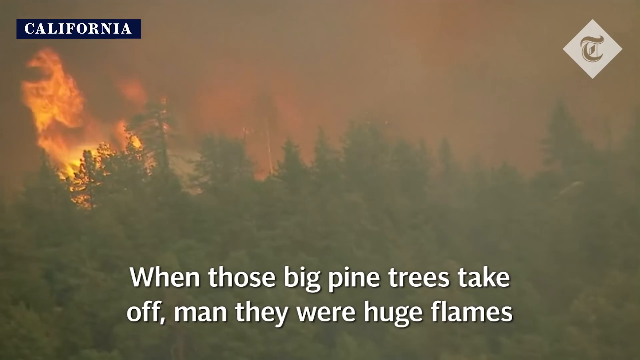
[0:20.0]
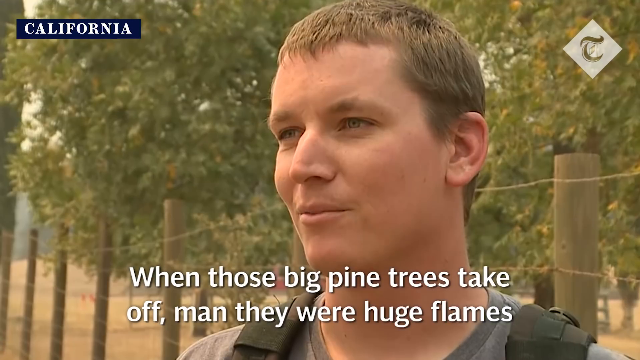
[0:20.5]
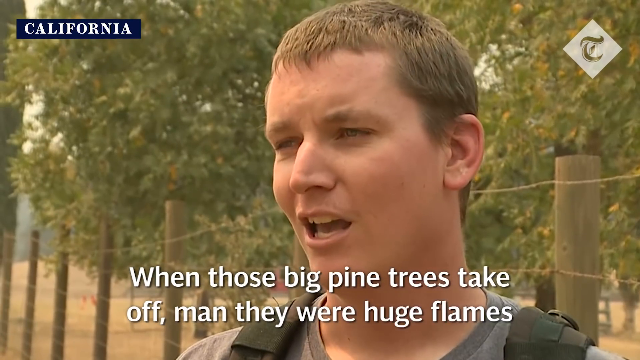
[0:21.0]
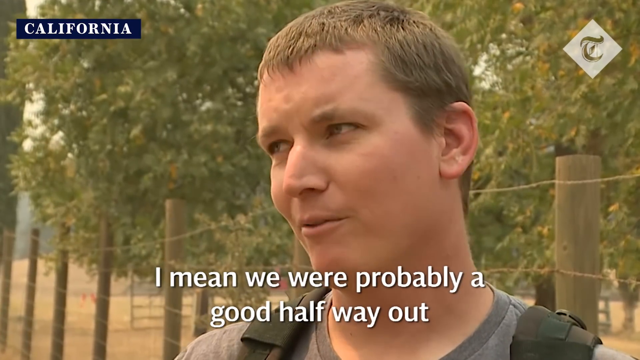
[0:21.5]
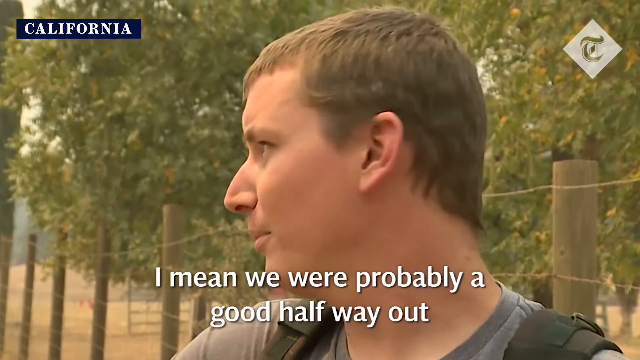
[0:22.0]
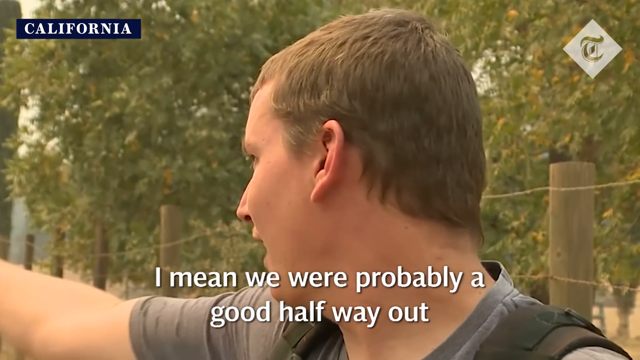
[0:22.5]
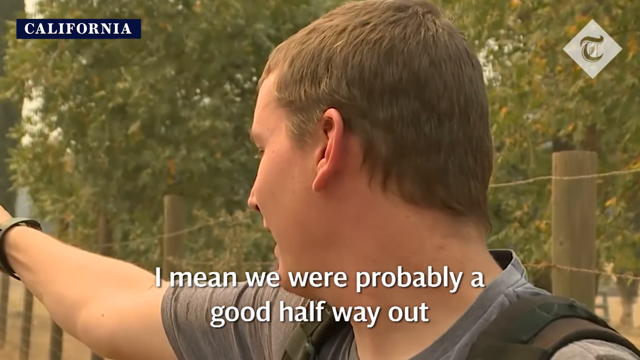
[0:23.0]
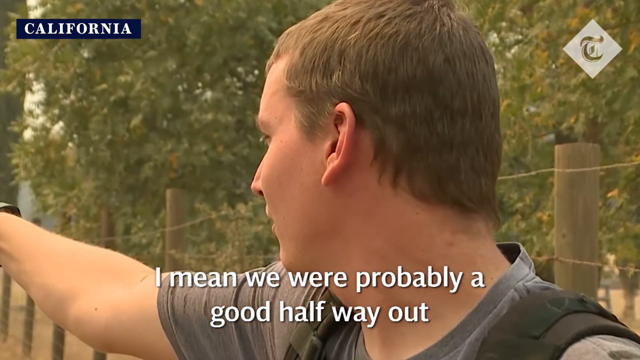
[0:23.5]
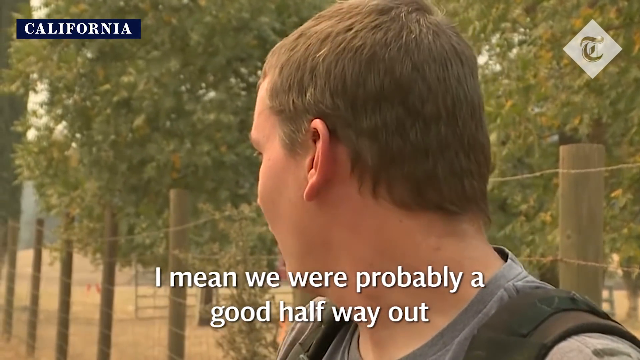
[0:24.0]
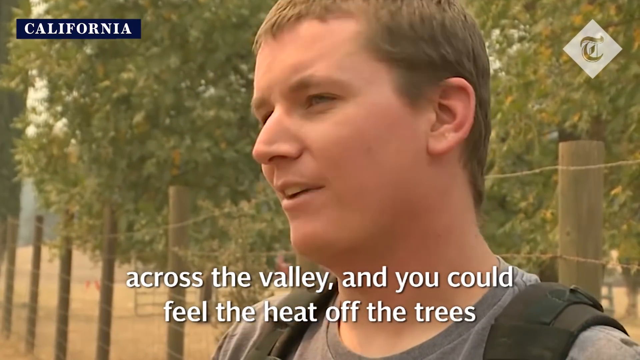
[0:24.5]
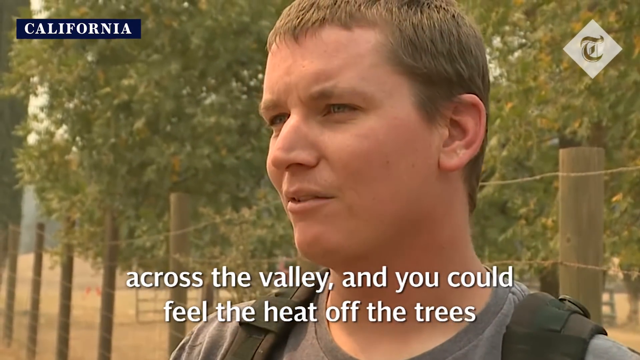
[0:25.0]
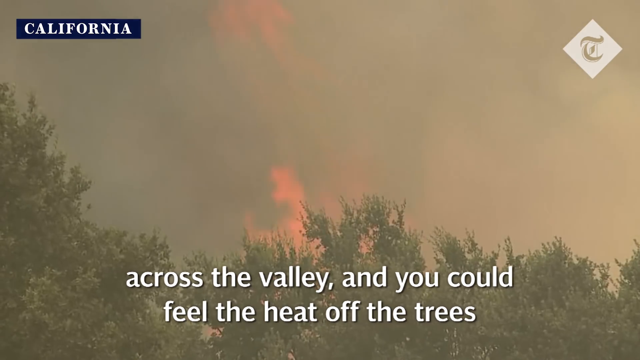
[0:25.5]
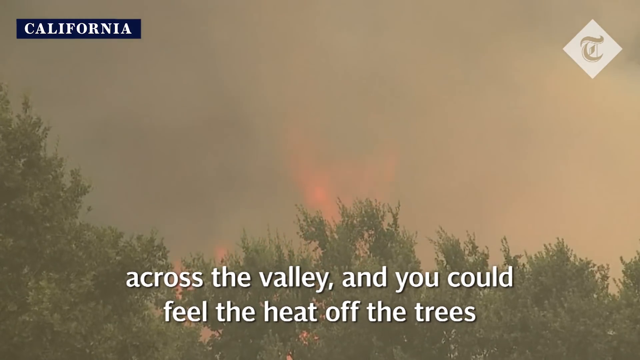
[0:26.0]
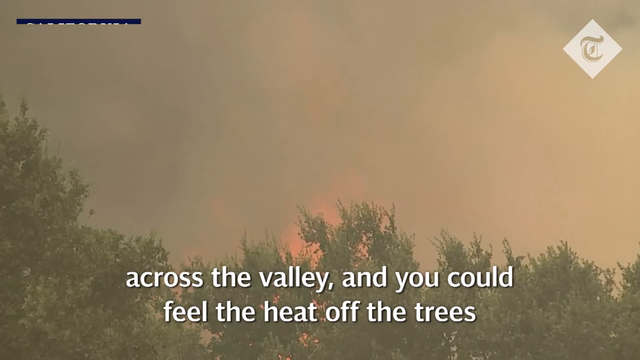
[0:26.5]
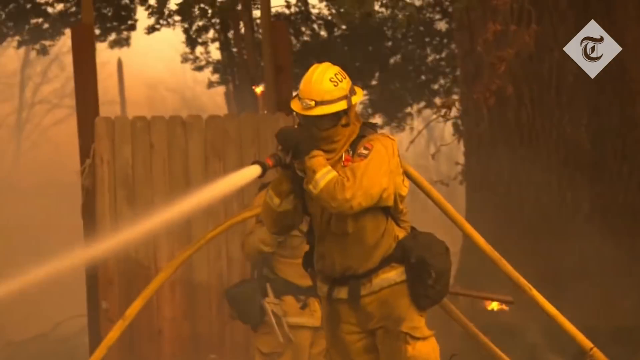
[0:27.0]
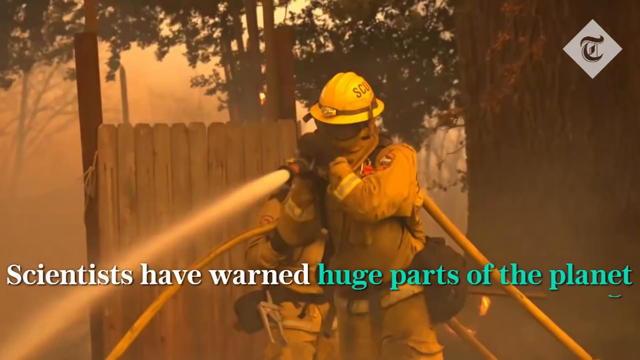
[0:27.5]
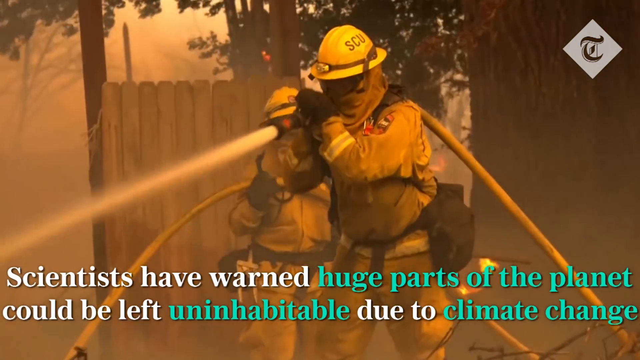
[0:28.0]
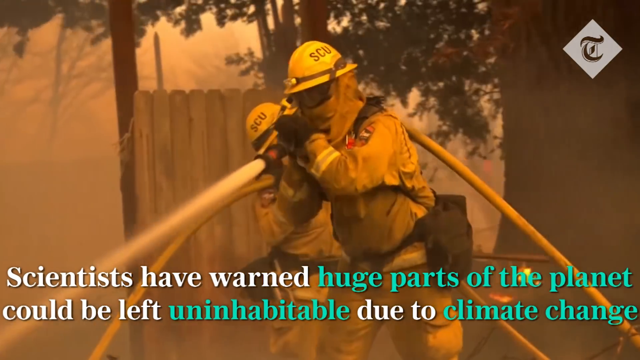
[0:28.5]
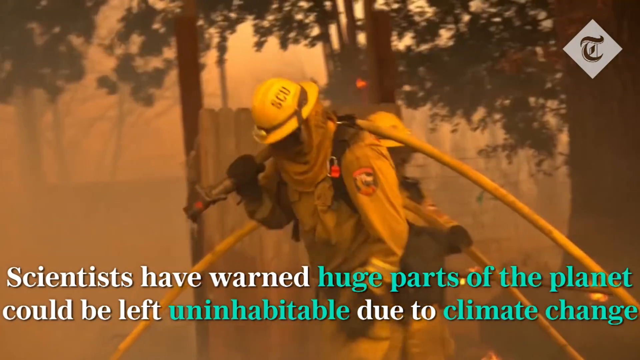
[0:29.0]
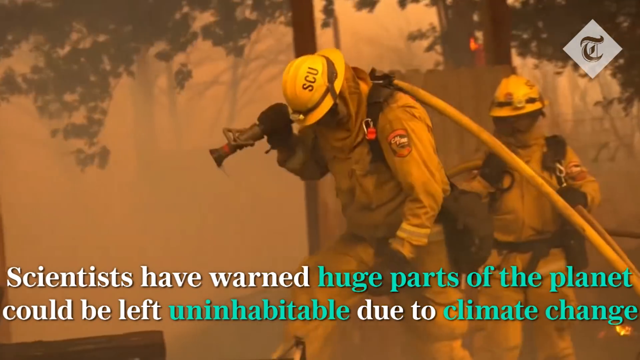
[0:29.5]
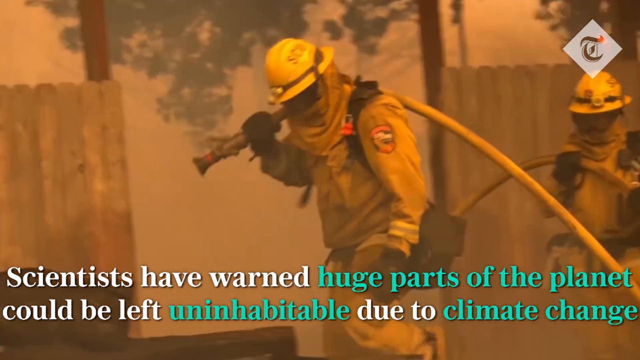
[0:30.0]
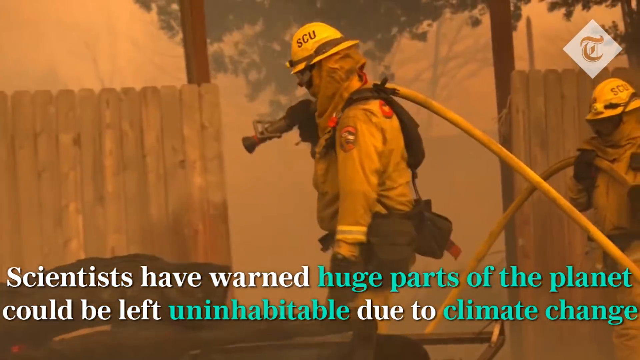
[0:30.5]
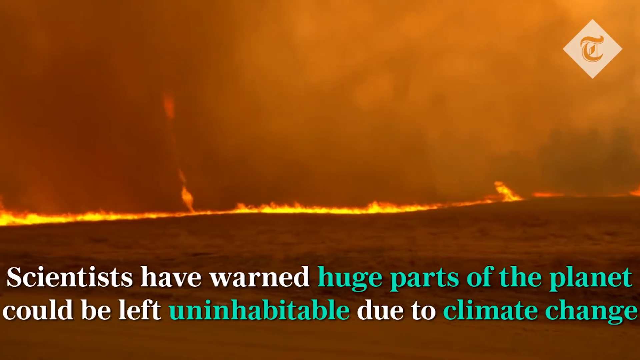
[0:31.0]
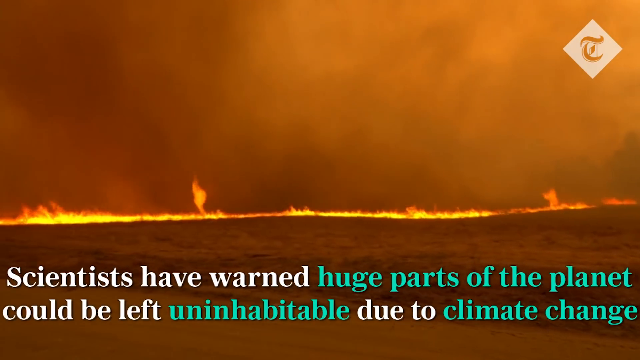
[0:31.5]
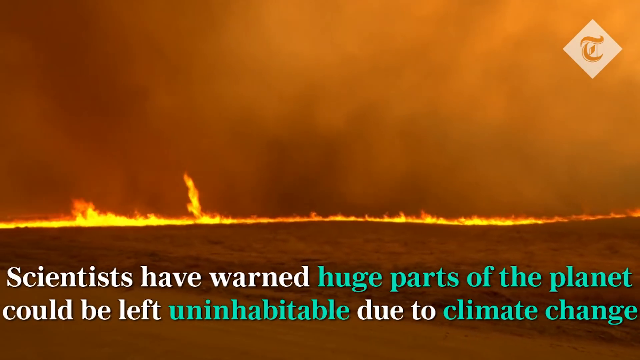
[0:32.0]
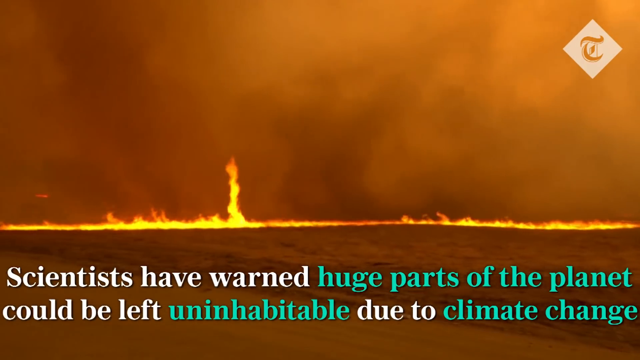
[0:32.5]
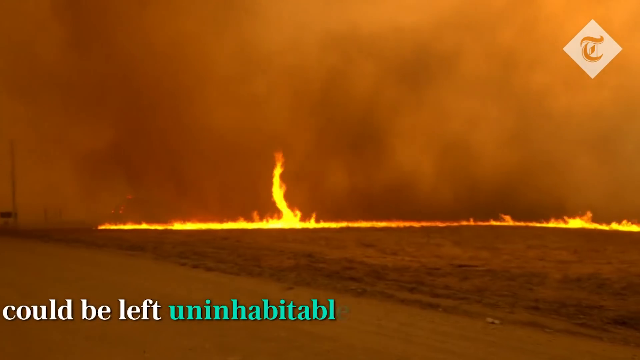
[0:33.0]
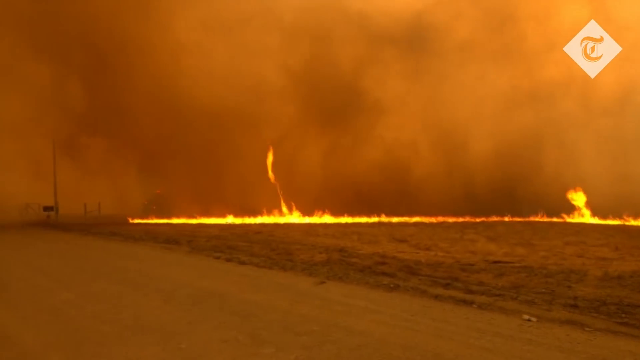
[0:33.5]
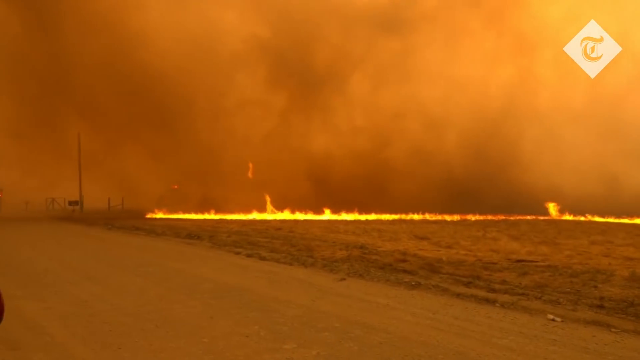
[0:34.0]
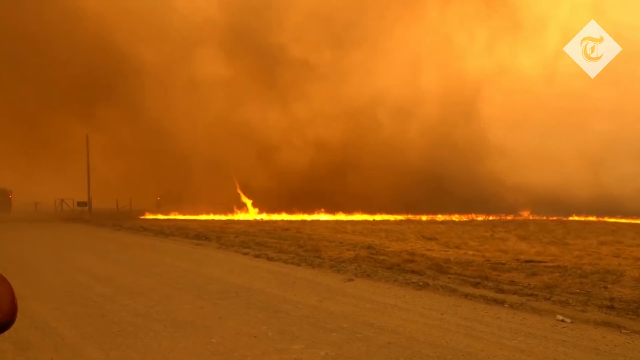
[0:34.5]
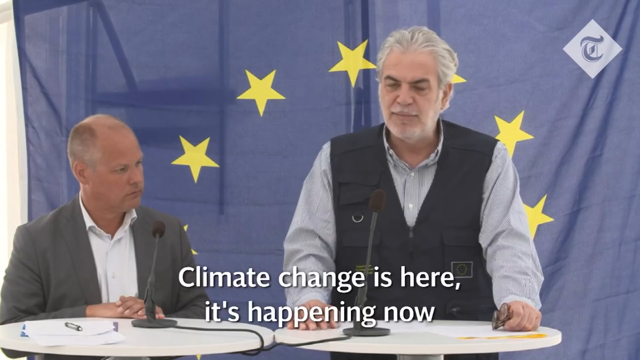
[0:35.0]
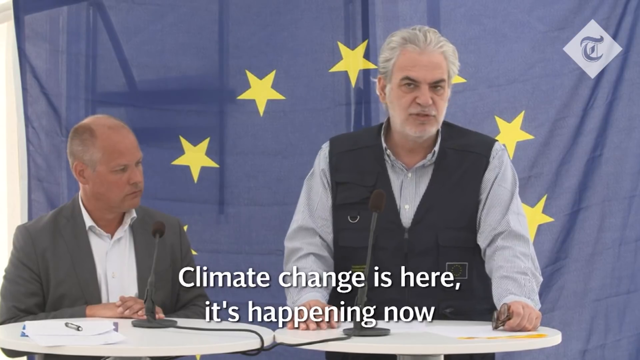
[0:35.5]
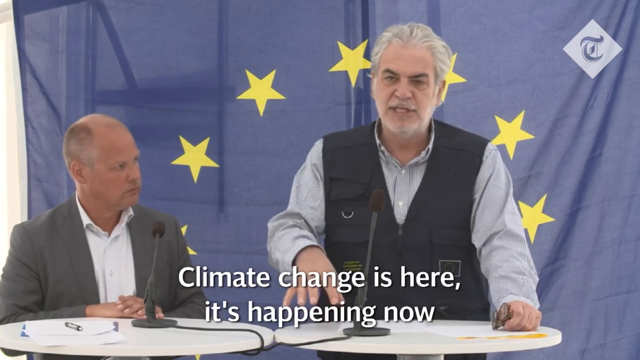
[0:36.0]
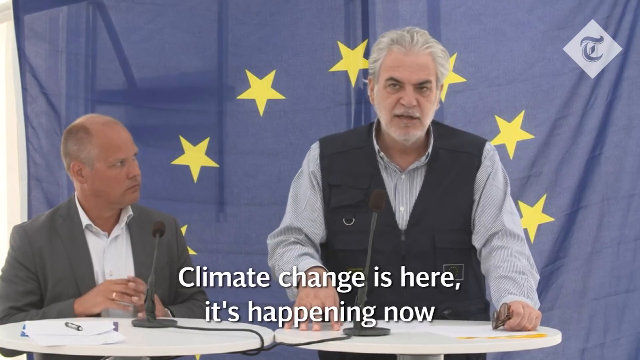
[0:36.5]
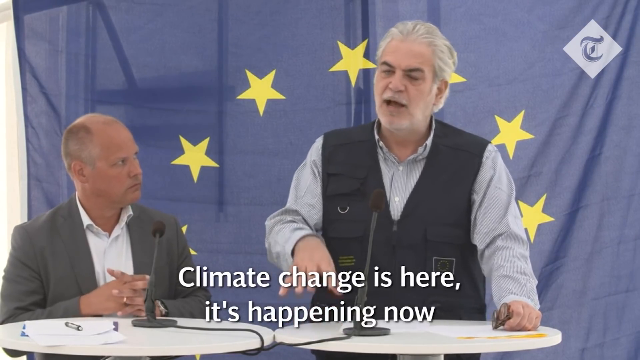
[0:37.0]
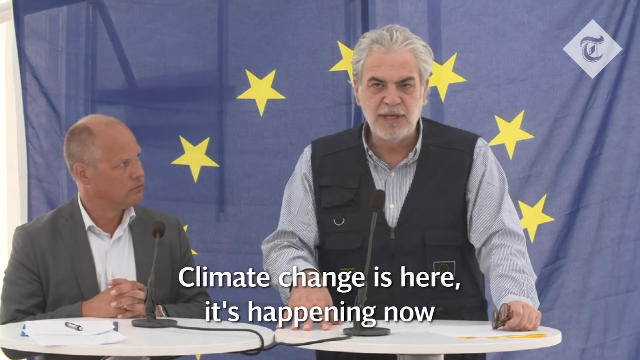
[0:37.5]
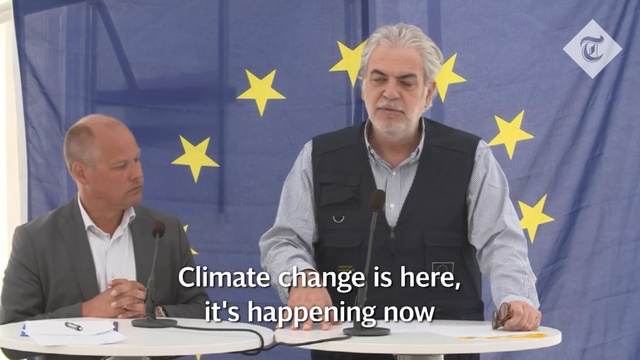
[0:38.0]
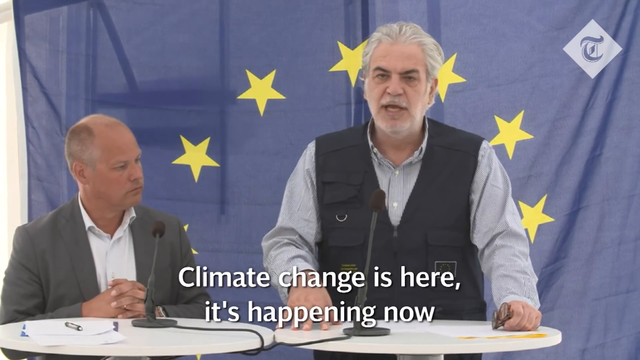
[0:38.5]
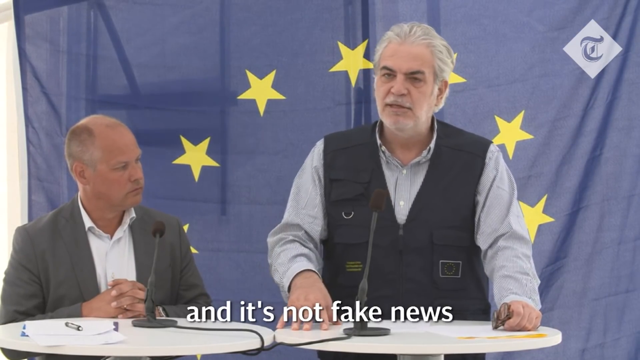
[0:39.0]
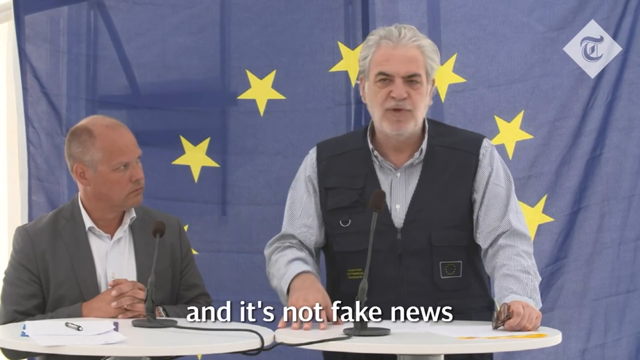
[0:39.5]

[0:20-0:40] A big fire burns among the trees, affecting most of them, where the aeroplane landed; the trees are pine trees. A young white man, maybe 28 or 29, with short brown hair, is speaking. The fire has spread everywhere. Two men appear, and the one talking next to the microphone is an old man. The background is blue and looks like a flag: a blue flag with yellow stars.